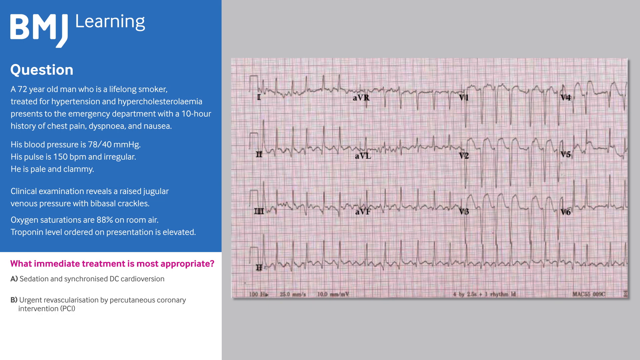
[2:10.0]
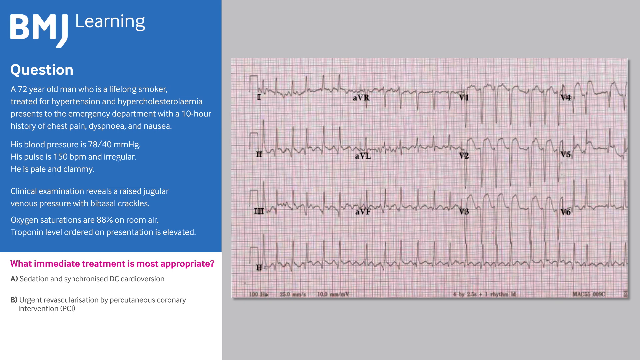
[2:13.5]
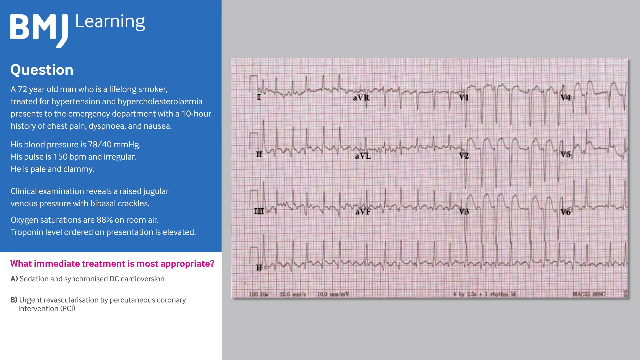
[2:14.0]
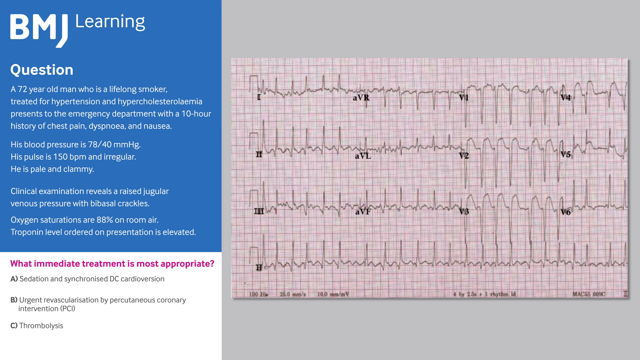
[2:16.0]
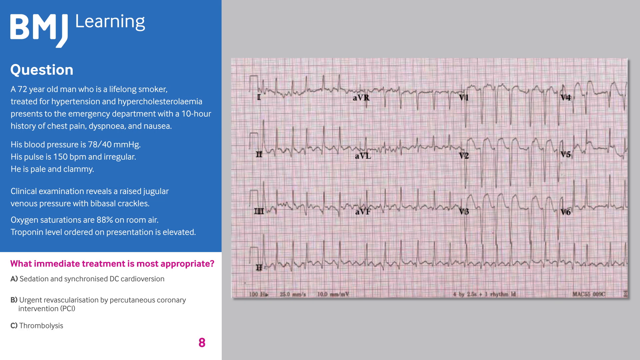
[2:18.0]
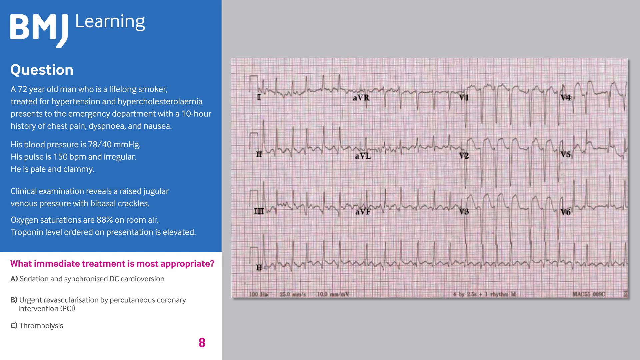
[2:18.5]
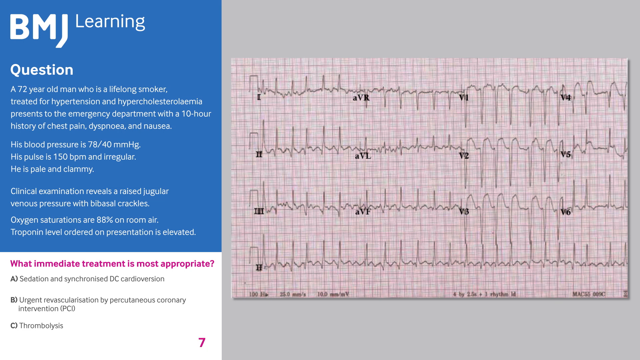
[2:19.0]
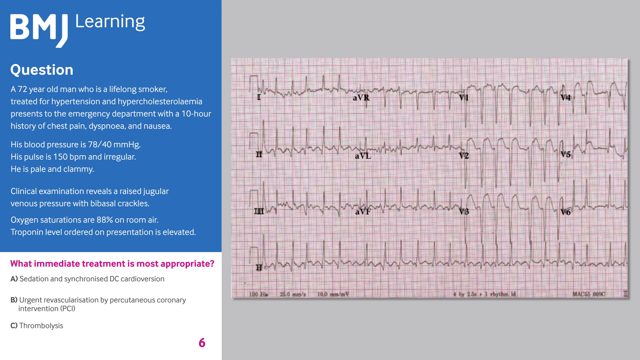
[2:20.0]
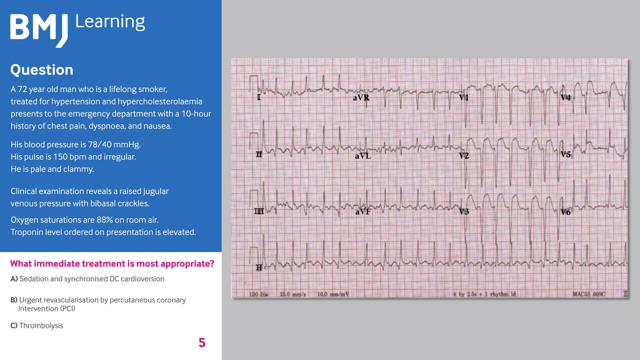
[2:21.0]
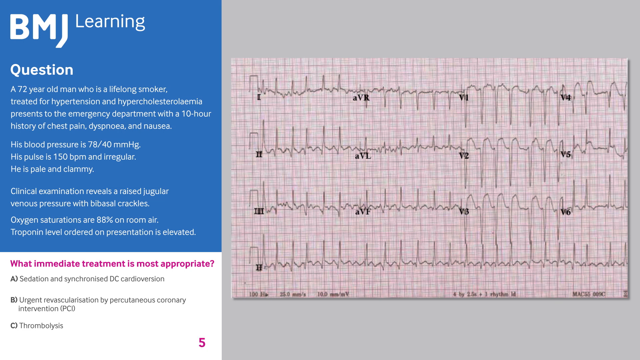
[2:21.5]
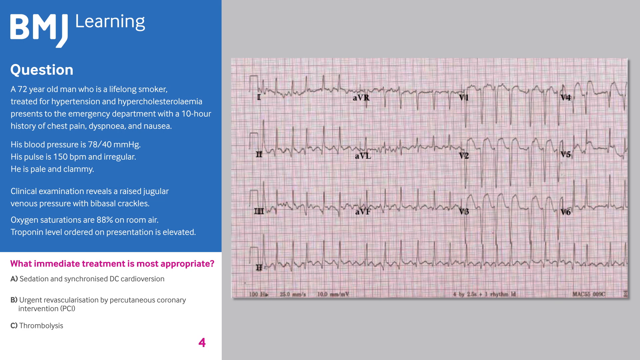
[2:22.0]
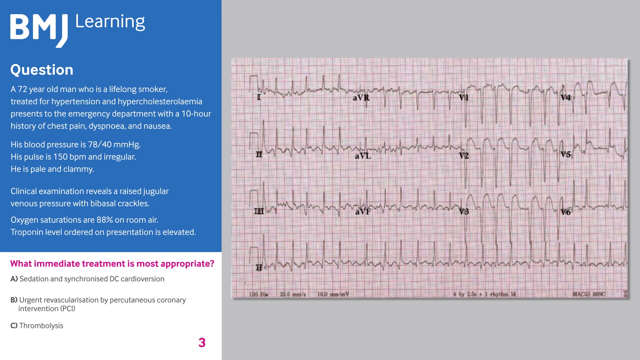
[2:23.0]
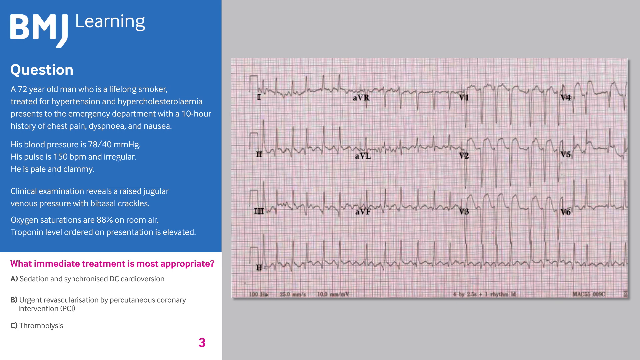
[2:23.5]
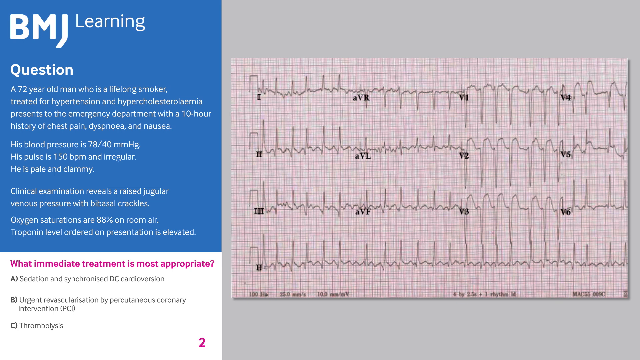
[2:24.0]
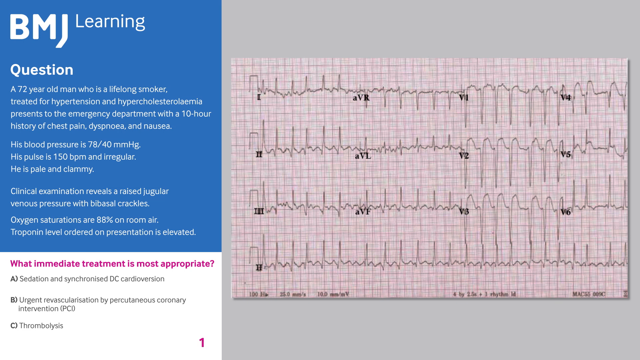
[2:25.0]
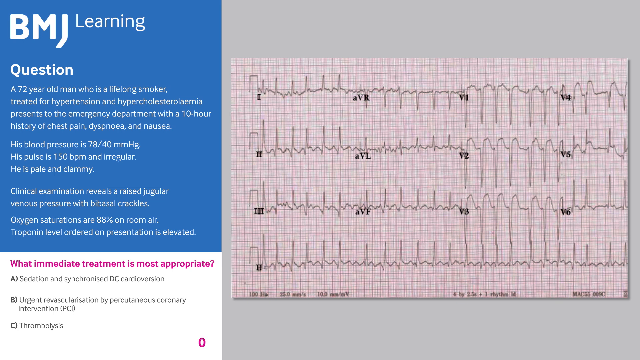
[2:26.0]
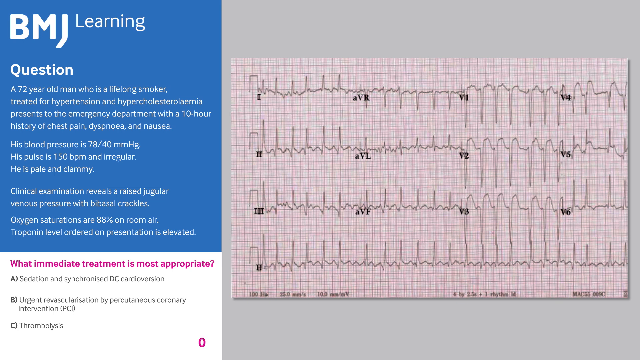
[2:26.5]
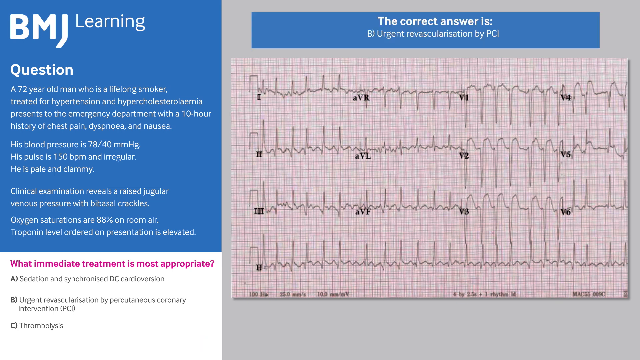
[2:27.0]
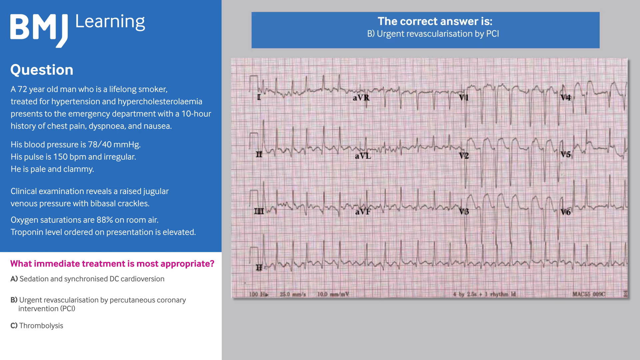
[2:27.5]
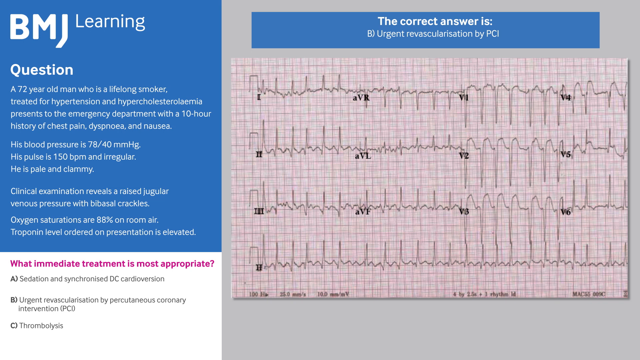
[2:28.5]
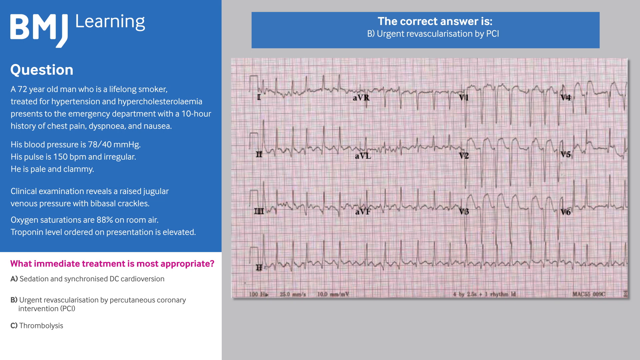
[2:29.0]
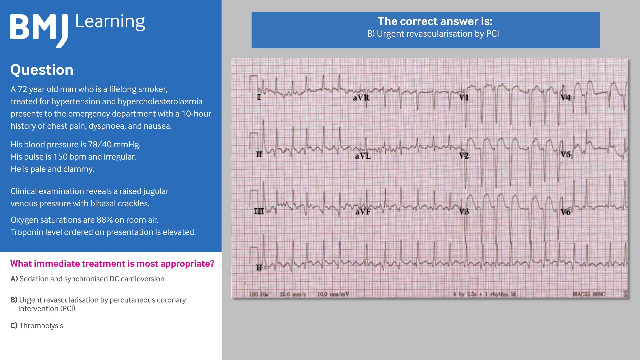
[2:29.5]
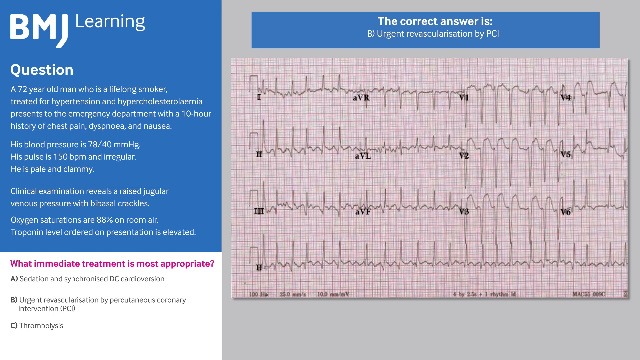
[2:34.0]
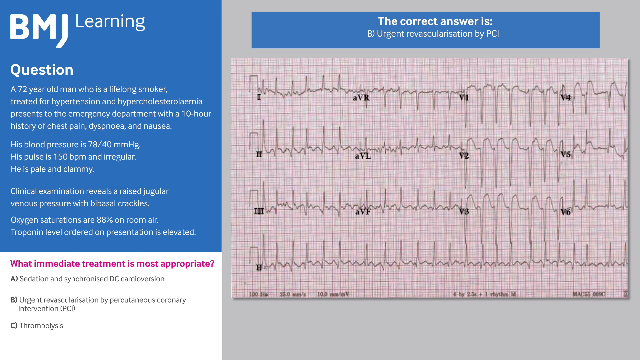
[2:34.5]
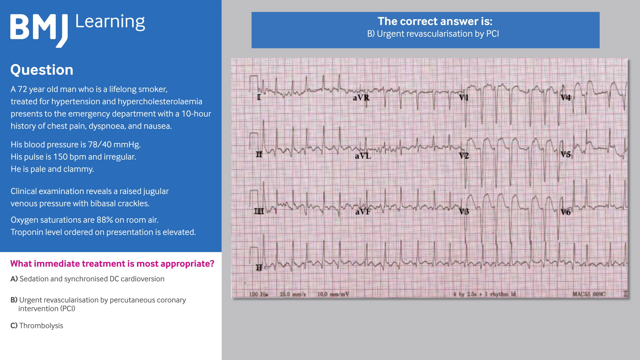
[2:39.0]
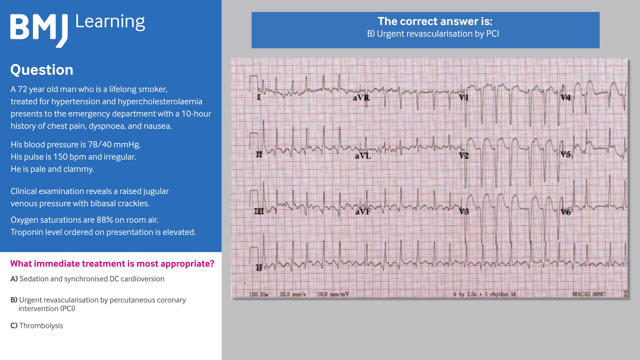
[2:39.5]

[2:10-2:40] The blue box takes up one quarter of the screen, going three quarters of the way down that section, with the white box in the remaining part. The blue box has white writing, and the white box has the question in purple: "What immediate treatment is most appropriate". The remaining three quarters of the screen show the ECG graph with a bold one, two, three and four in Roman numerals, AVR, AVL and AVF in black, and V1 through V6 in black at points on the graph. The answer options in the white box include "A, sedation and synchronized DC cardioversion" and "B, urgent revascularization by percutaneous coronary intervention". The blue box above the ECG then shows "the correct answer is B, urgent revascularization by PCI", which stays on screen for a while.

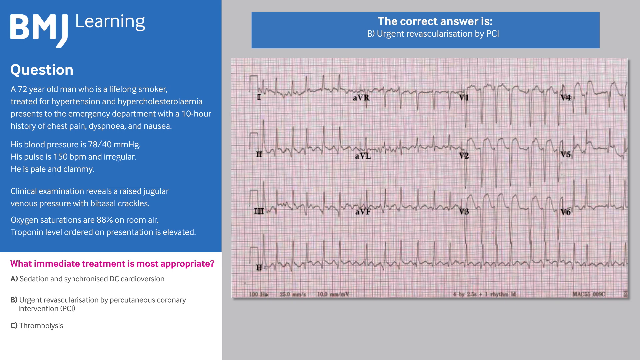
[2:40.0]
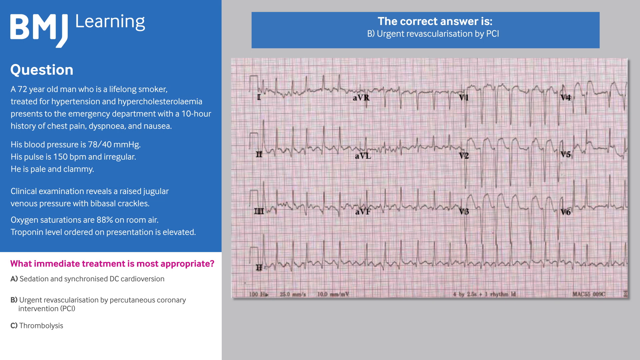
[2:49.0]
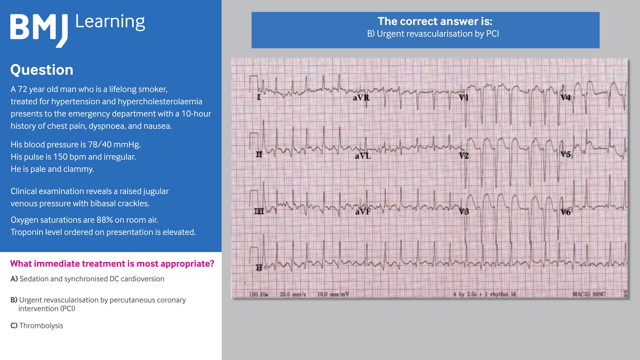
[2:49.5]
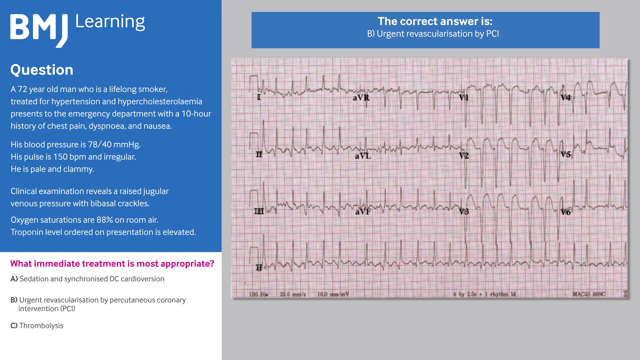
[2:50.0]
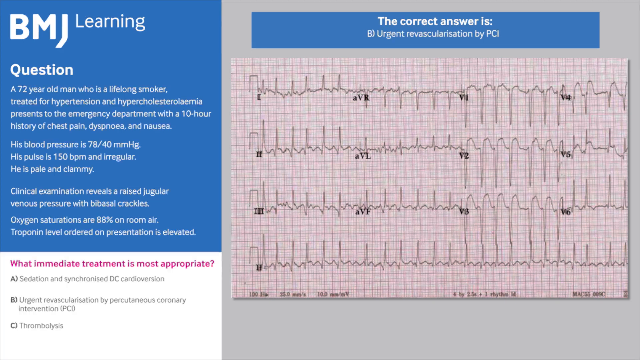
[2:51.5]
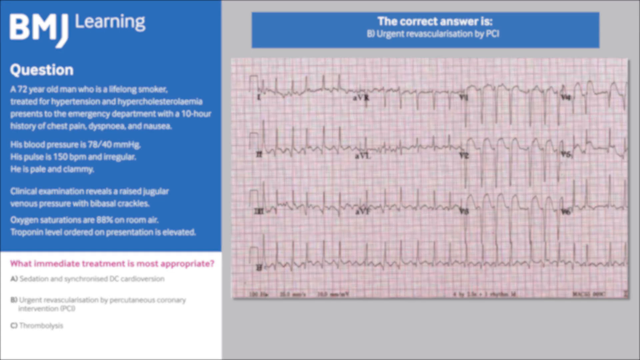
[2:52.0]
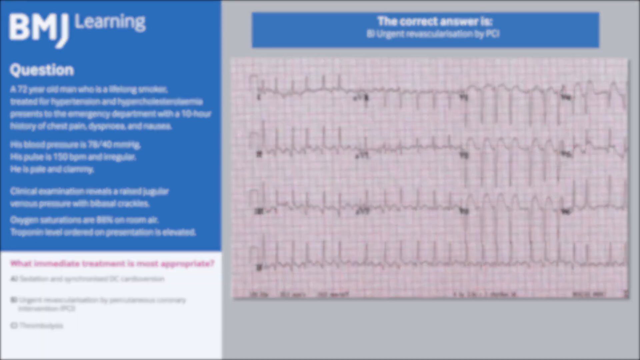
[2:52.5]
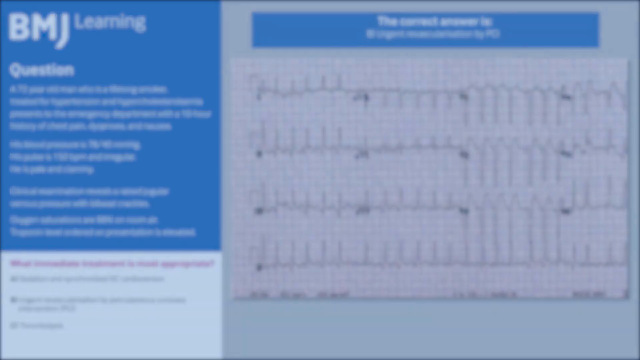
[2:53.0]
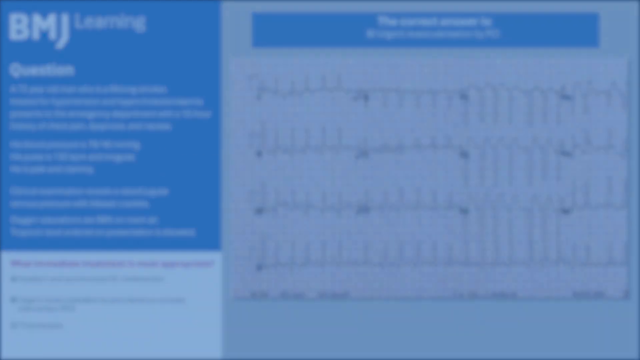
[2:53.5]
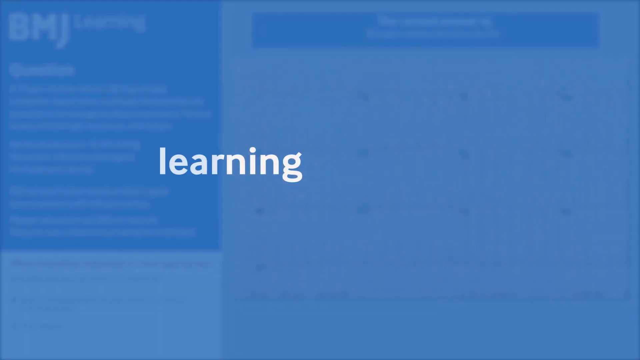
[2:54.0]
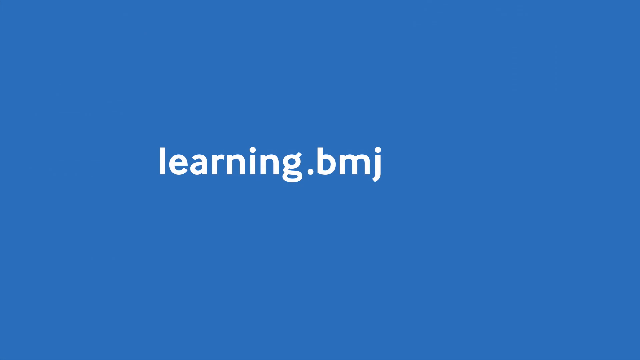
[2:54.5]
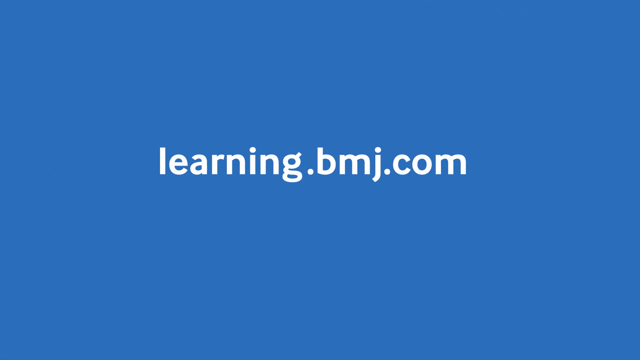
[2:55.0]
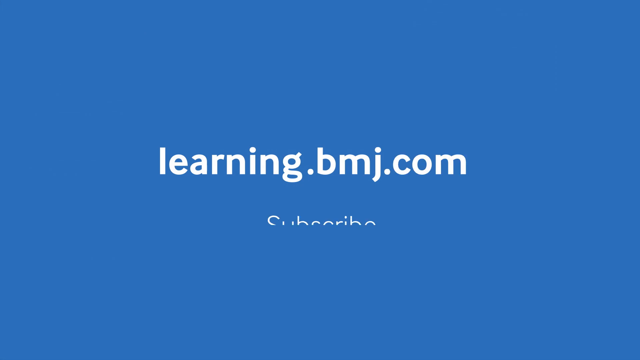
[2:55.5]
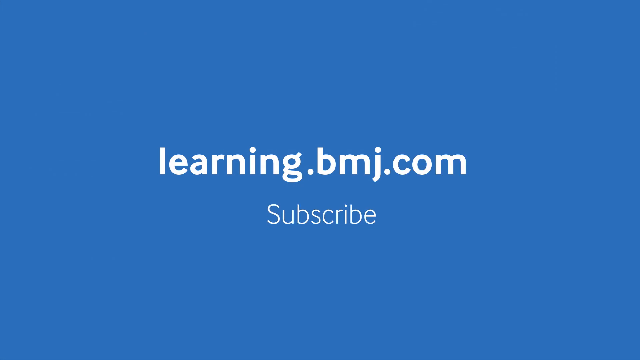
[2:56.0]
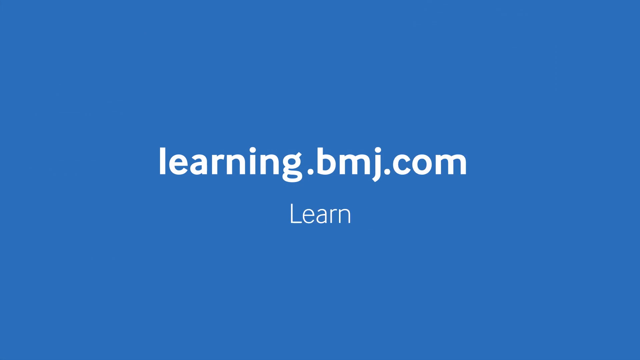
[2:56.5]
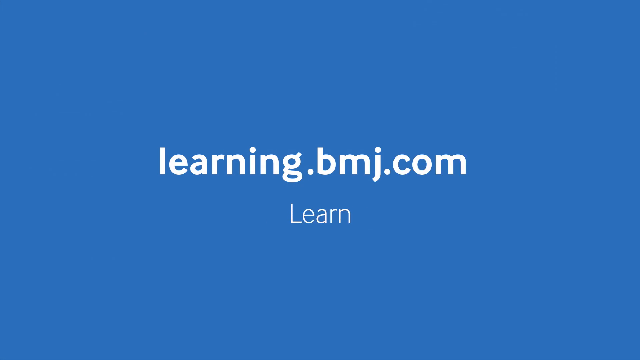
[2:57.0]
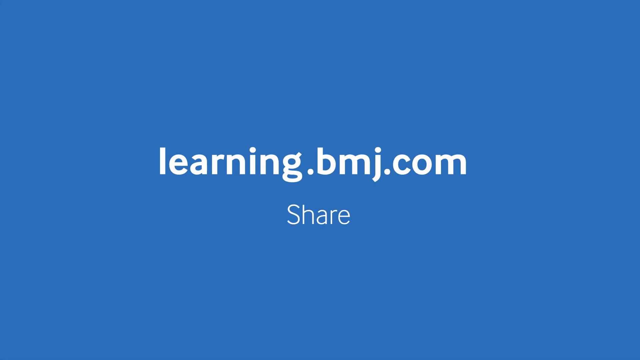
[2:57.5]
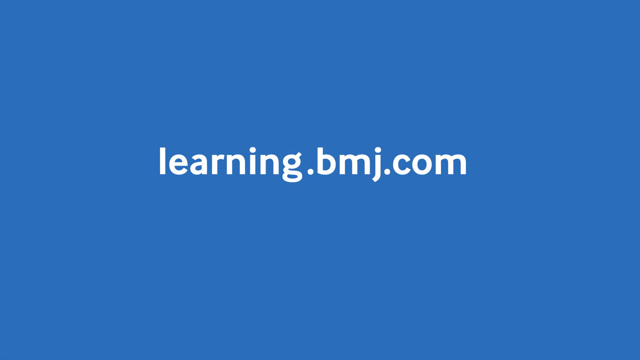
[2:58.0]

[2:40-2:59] One quarter of the screen is taken up partially by the blue box with white writing, extending three quarters of the way down, and the white box fills the remaining part with the question in purple, "What immediate treatment is most appropriate?", and the multiple choice options in black. The ECG fills the rest of the screen, a graph showing the heart fluctuations with one, two, three and four in bold black font, AVR, AVL and AVF in black font, and V1 through V6 also in black font. Above the ECG, the blue box's white writing says "the correct answer is B urgent revascularization by PCI". The correct answer stays on screen for a long time, then the video fades out to "Learning.bmj.com, subscribe, learn, share" in white writing on a blue background.